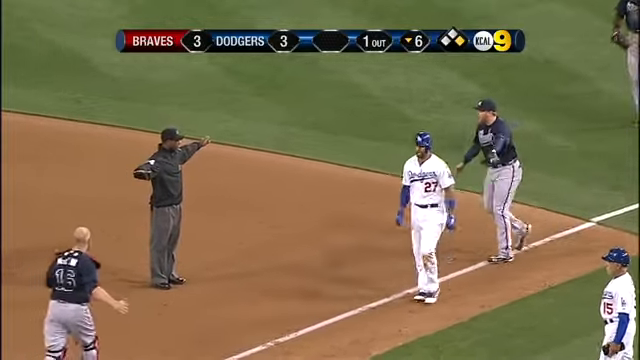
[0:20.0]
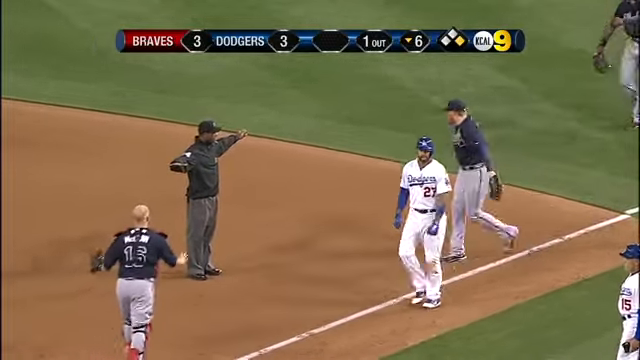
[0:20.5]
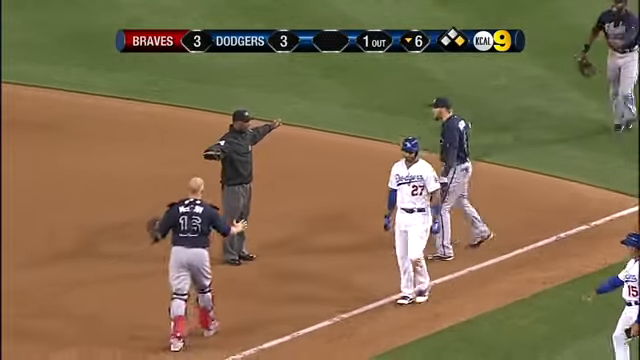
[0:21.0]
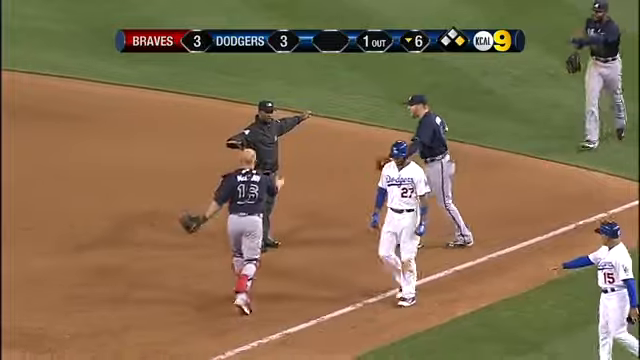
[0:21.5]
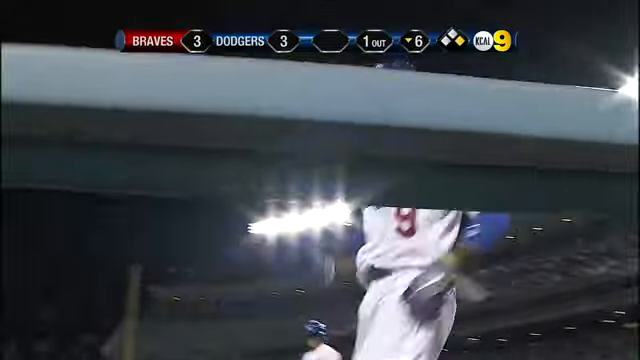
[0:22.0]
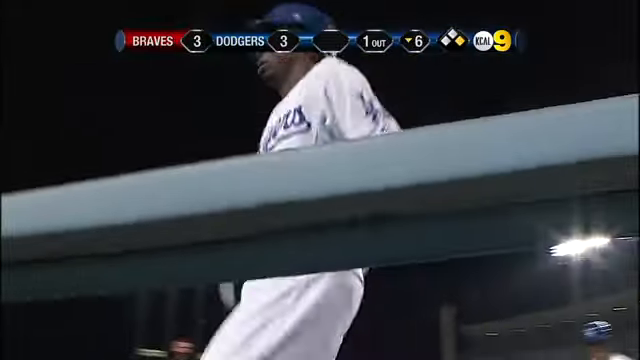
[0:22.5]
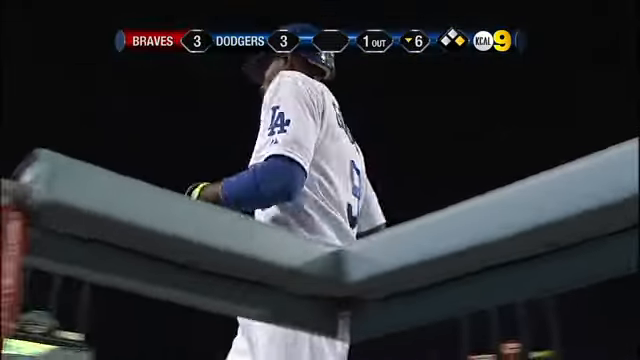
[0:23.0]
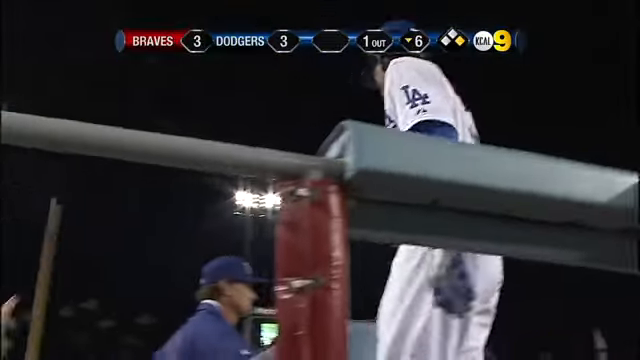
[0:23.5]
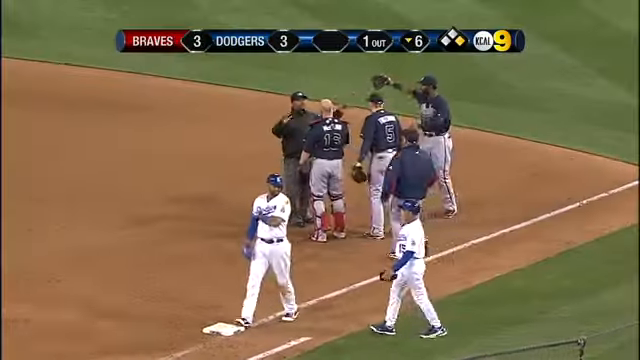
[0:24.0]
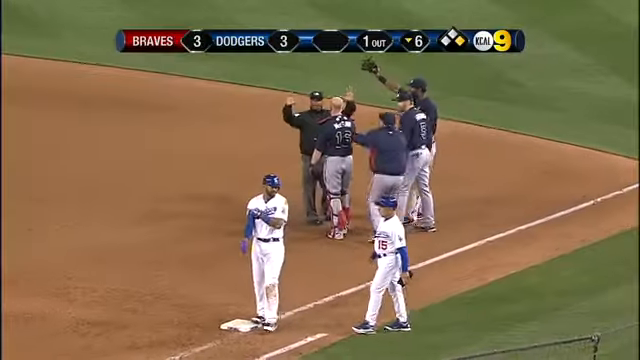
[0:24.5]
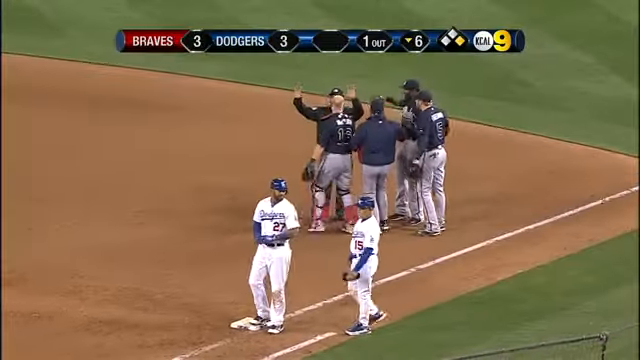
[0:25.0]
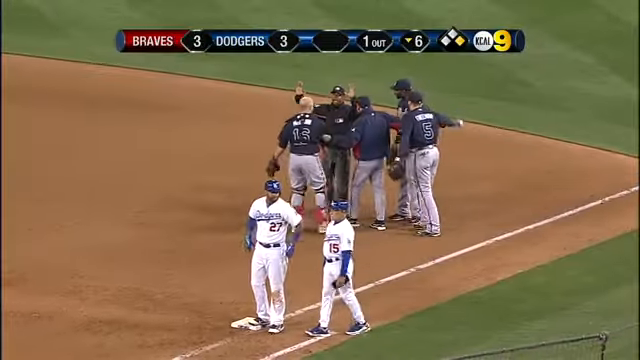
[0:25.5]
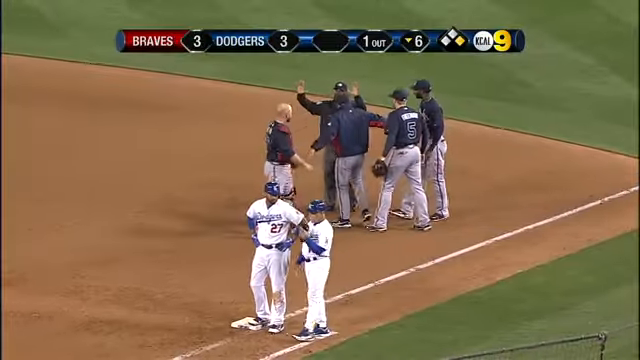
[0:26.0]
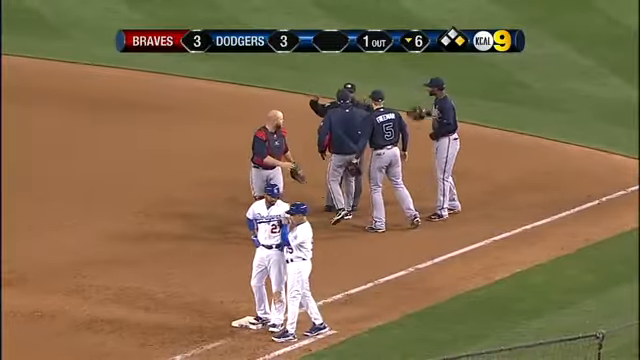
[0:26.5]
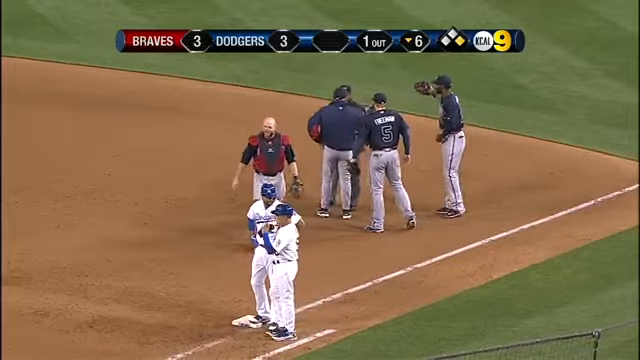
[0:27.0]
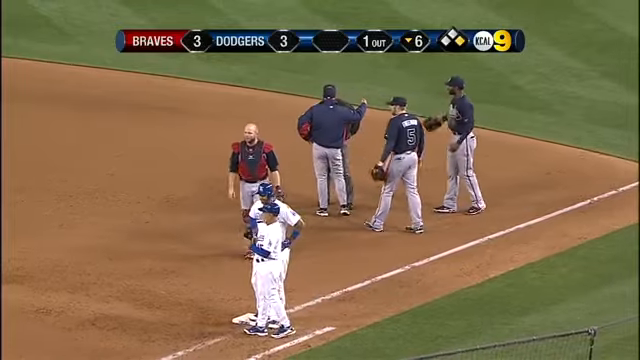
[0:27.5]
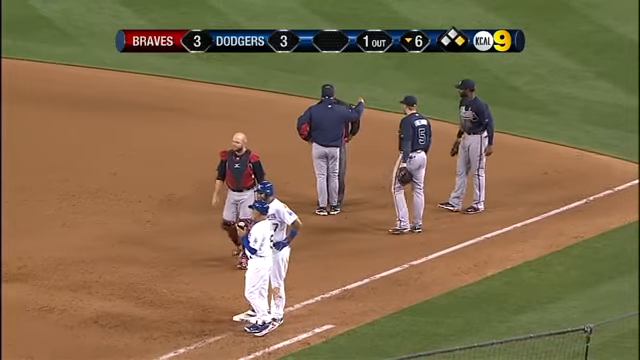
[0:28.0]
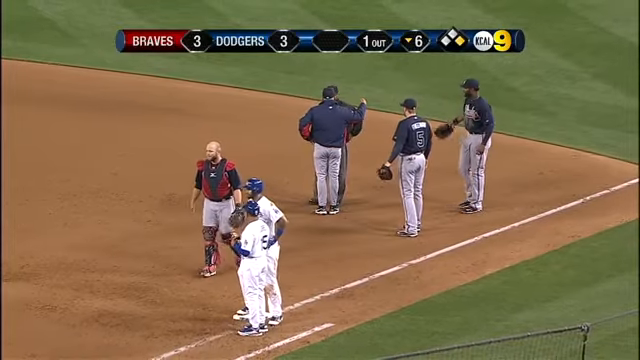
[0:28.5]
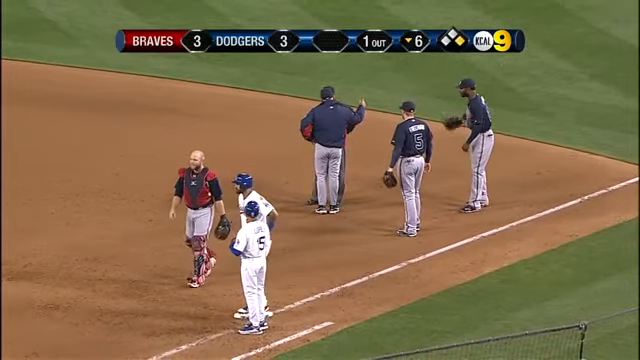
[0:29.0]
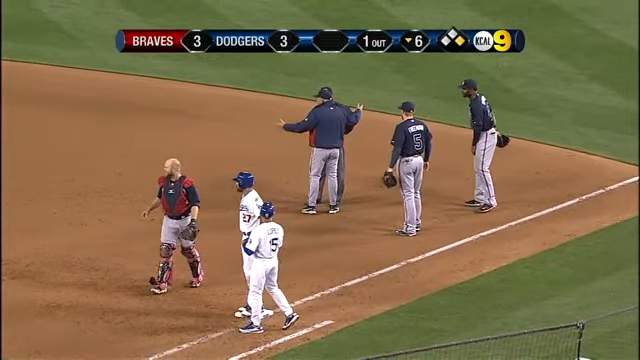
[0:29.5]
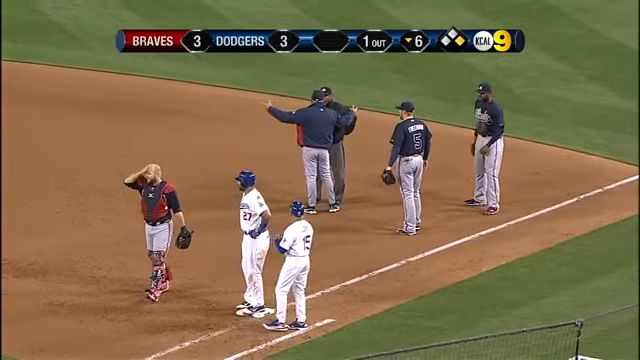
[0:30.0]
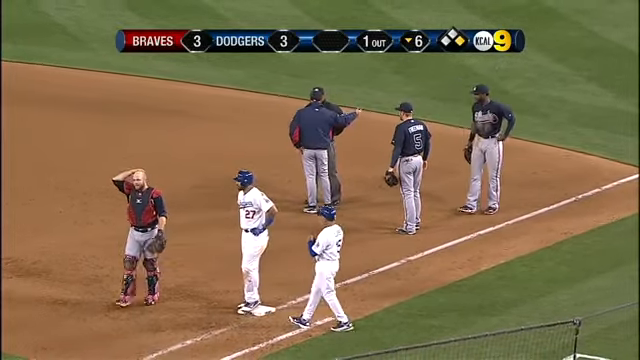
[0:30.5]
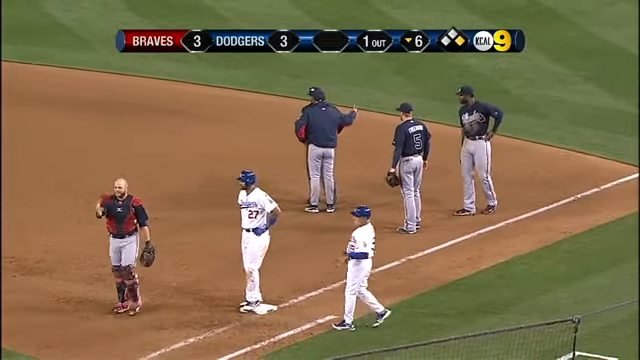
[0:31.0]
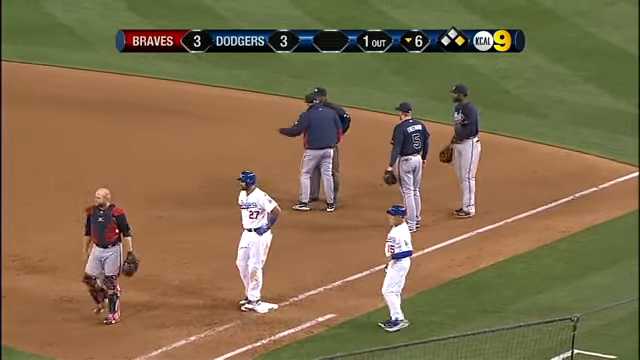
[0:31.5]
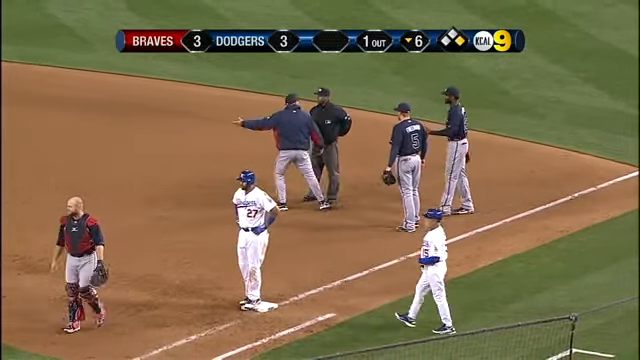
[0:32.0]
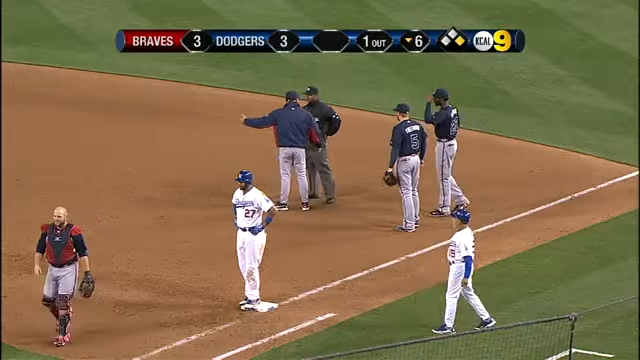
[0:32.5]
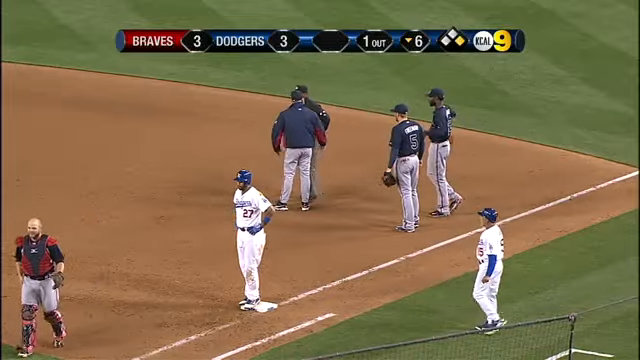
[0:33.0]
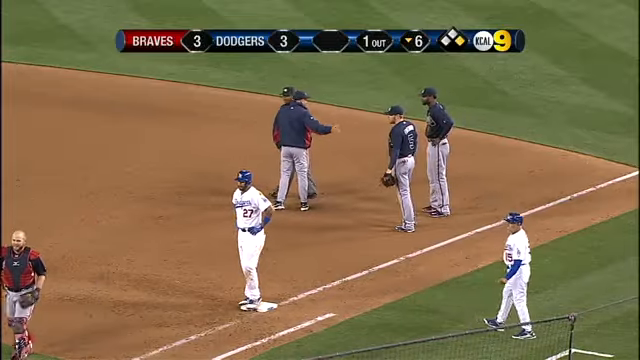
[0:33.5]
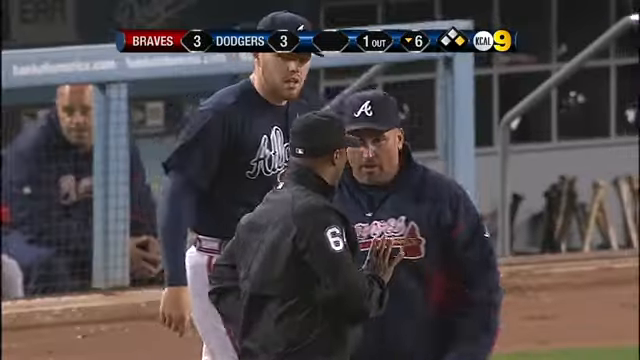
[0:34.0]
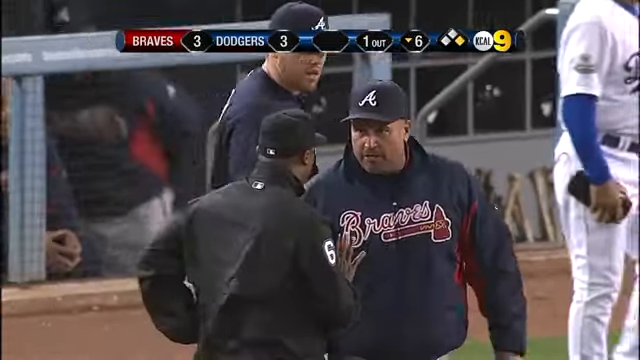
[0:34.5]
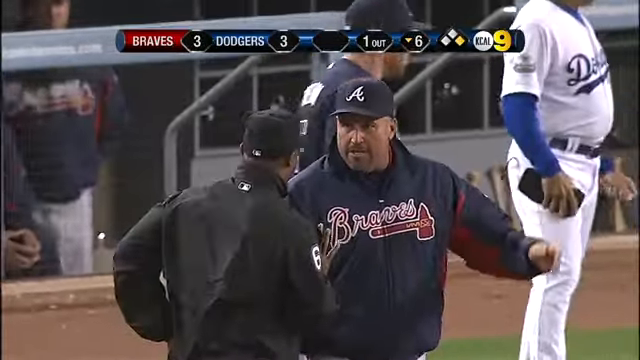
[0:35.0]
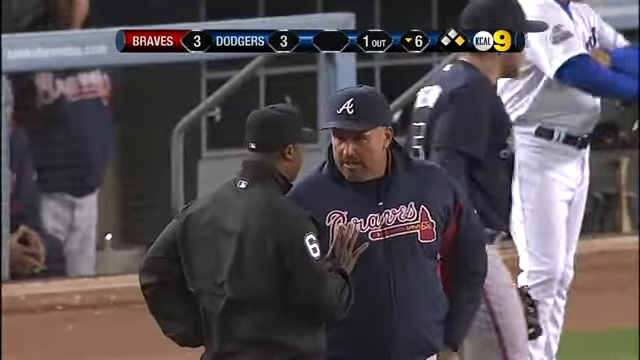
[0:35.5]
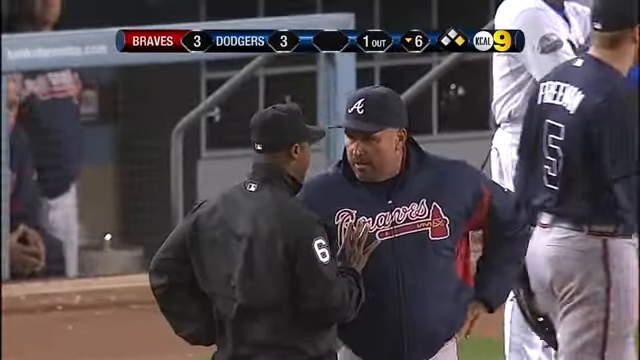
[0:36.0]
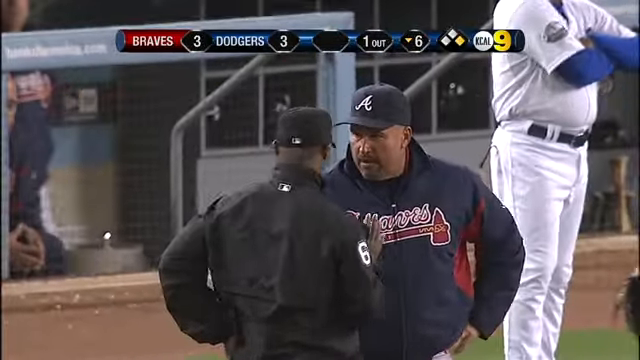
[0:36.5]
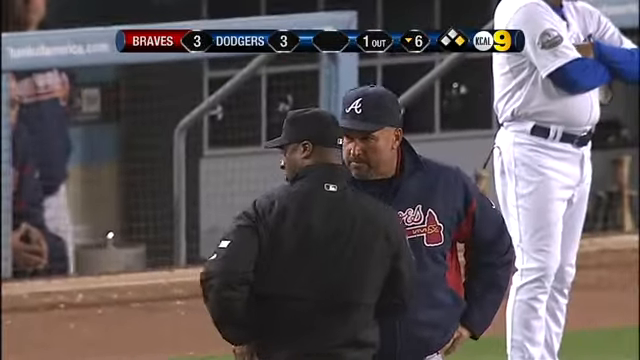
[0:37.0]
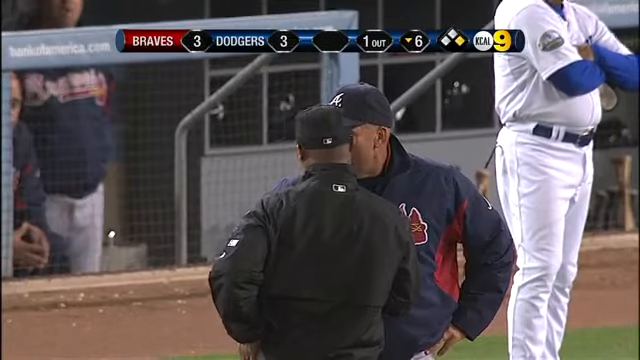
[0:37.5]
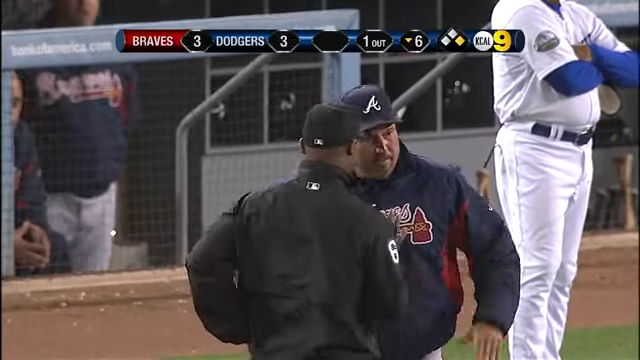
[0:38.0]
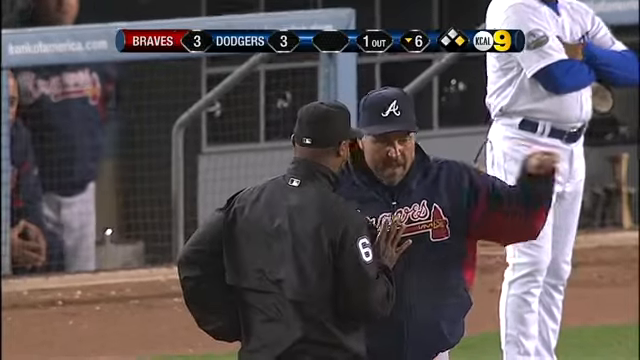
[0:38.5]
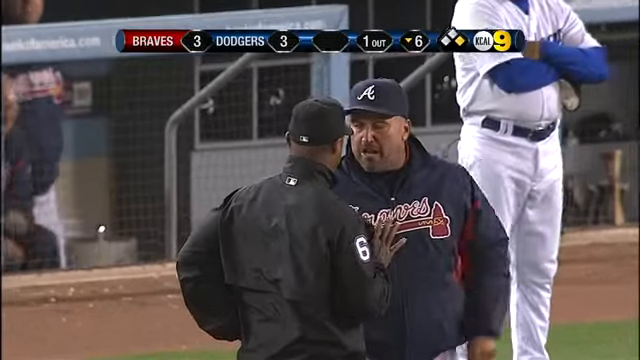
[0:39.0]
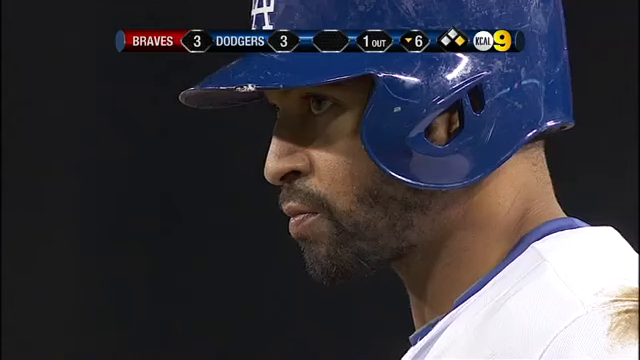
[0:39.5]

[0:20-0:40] In an MLB baseball game that appears to be tied 3-3, the camera is zoomed in on what appears to be first base. A ref is on the left, just left of the base and a little inward. He is a Black man in a black long-sleeve coat, gray pants and a black baseball cap, facing right with his arms out in a T position, signaling that the runner is safe. A man who looks like a player comes in from the right in a black jersey, black hat and white pants, approaching him toward the left. His mouth movements appear very aggressive, as he is probably arguing that the runner was out. The shot then moves to the sidelines, where a Black player from the opposing team walks to the left. He wears an LA Dodgers uniform, white with medium blue lettering, with LA on his left sleeve, and white pants. The dark sky is visible behind him.